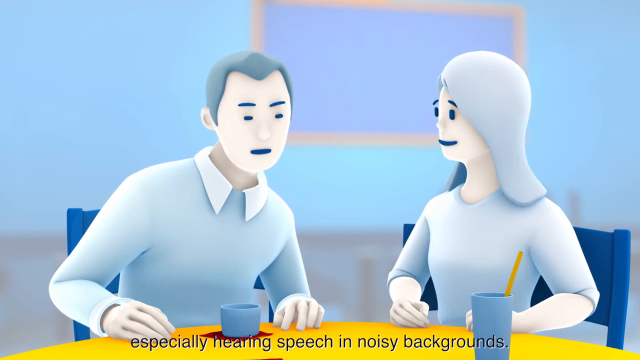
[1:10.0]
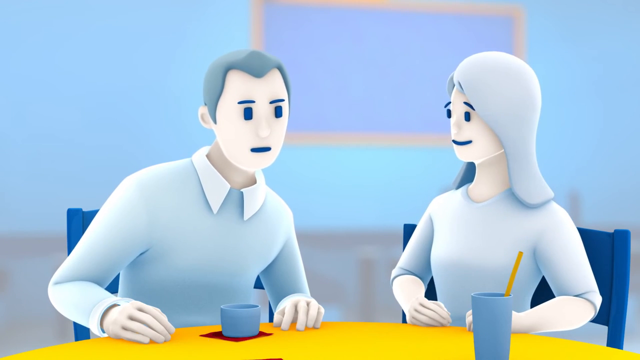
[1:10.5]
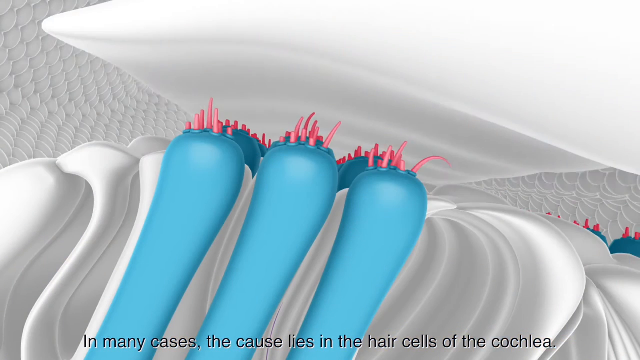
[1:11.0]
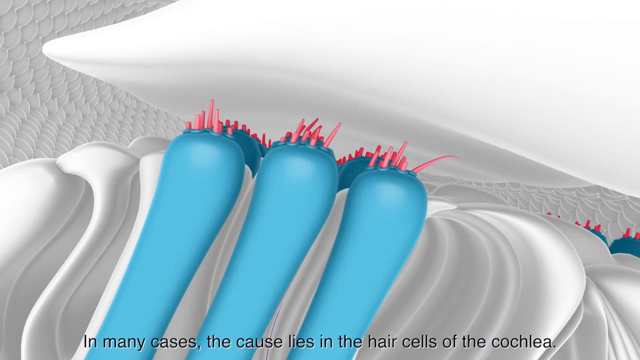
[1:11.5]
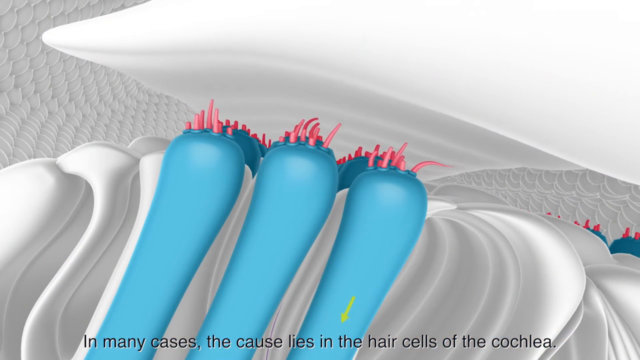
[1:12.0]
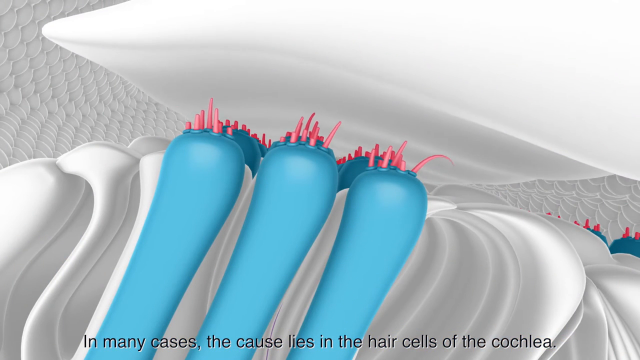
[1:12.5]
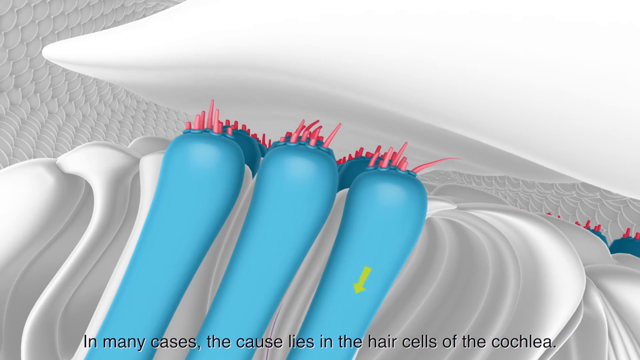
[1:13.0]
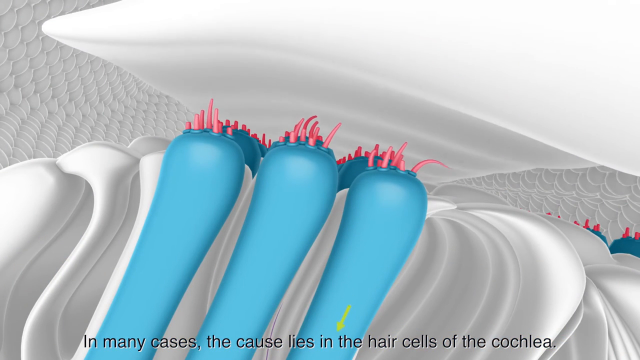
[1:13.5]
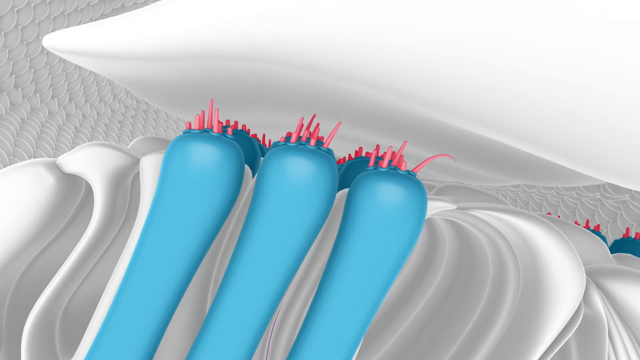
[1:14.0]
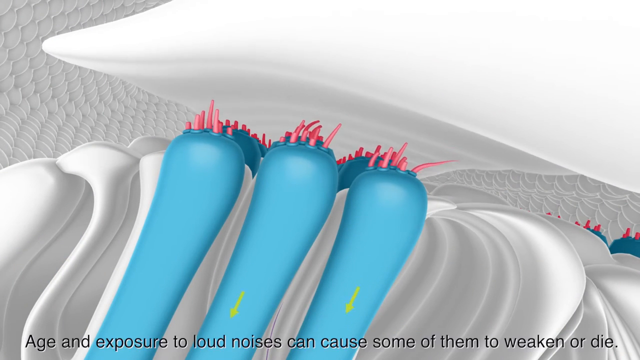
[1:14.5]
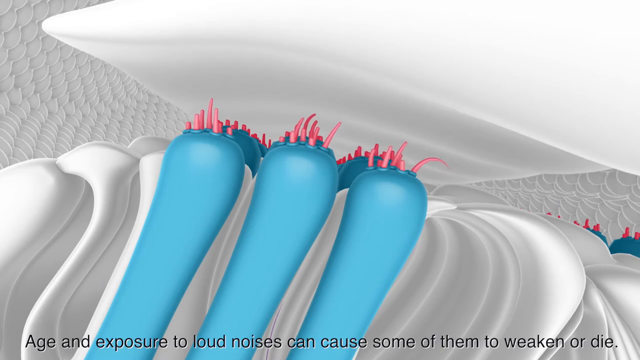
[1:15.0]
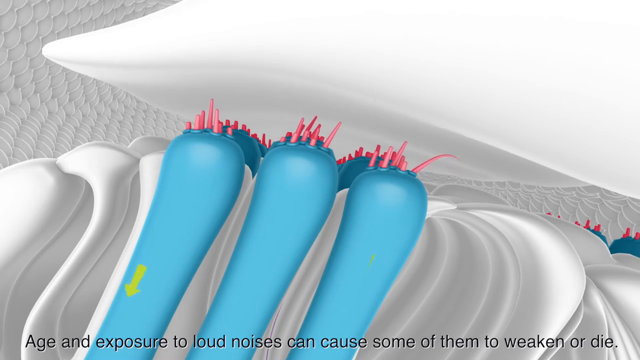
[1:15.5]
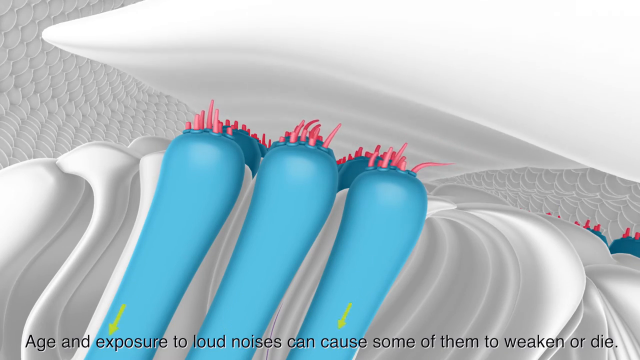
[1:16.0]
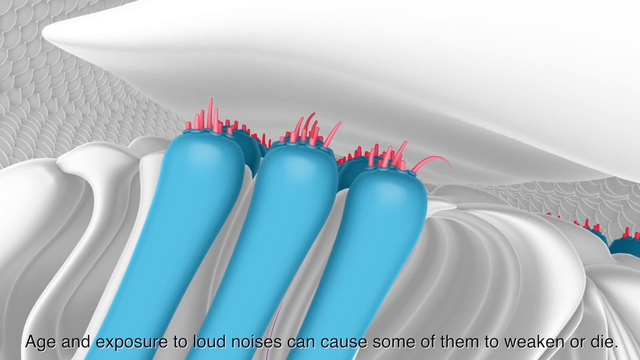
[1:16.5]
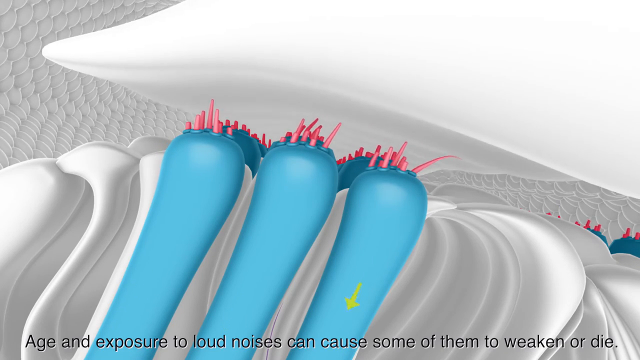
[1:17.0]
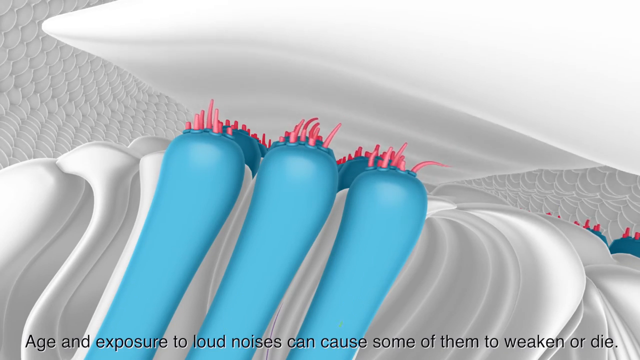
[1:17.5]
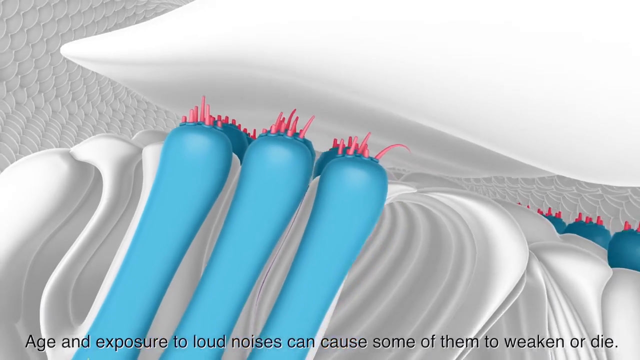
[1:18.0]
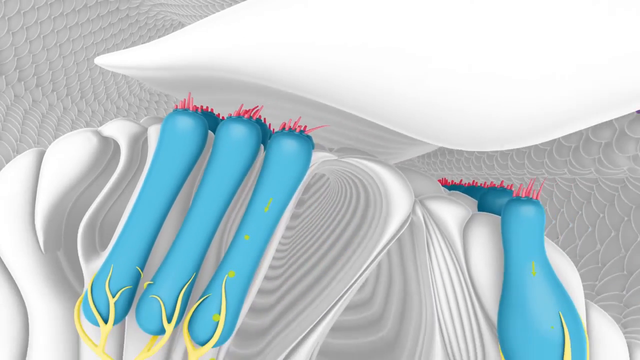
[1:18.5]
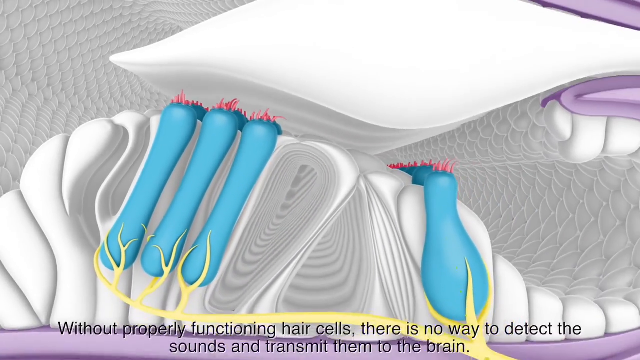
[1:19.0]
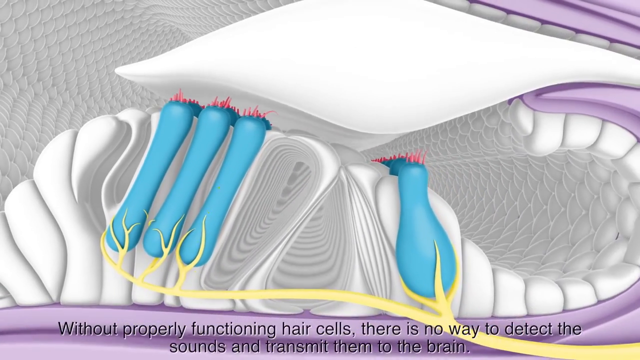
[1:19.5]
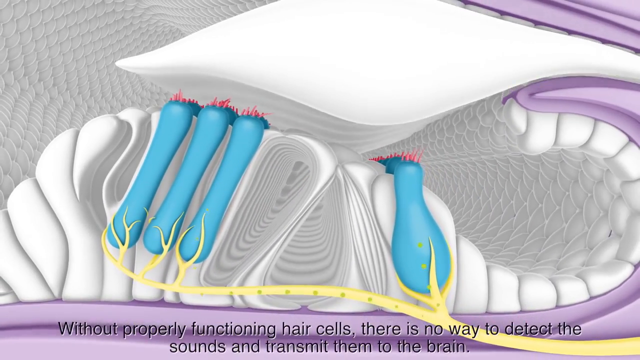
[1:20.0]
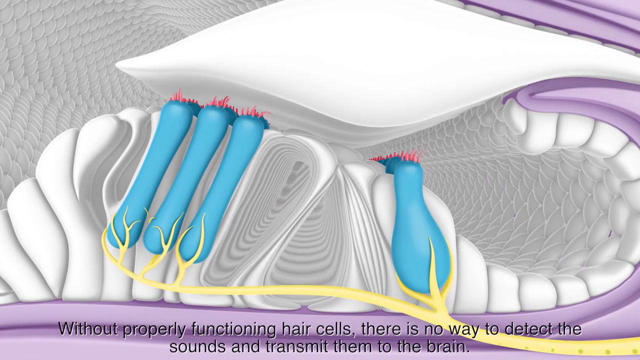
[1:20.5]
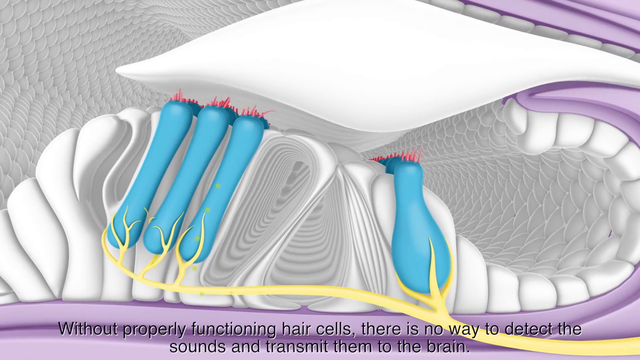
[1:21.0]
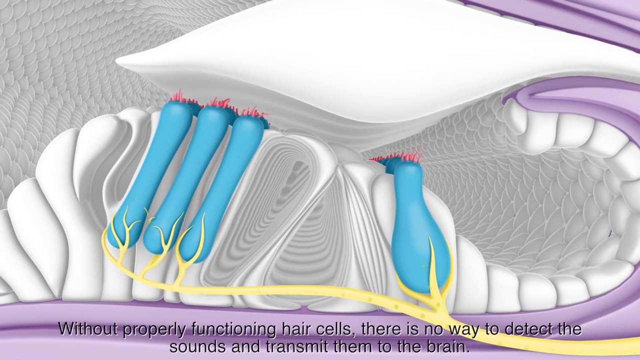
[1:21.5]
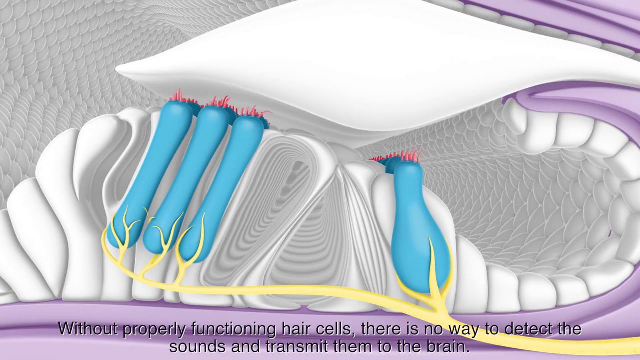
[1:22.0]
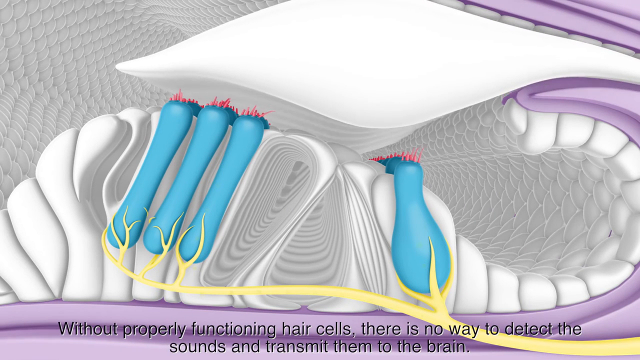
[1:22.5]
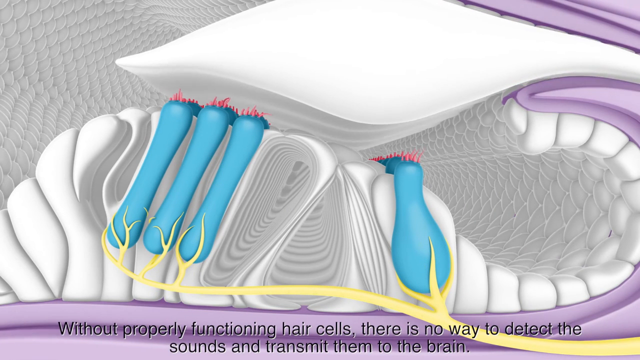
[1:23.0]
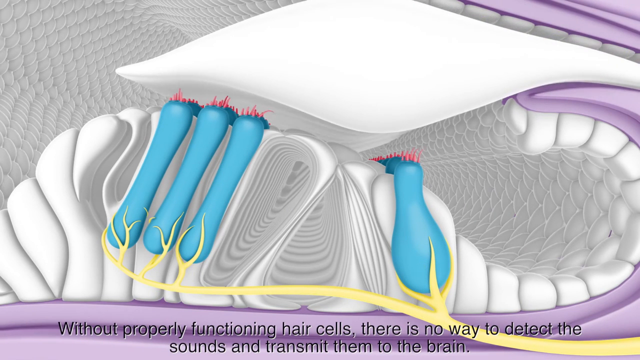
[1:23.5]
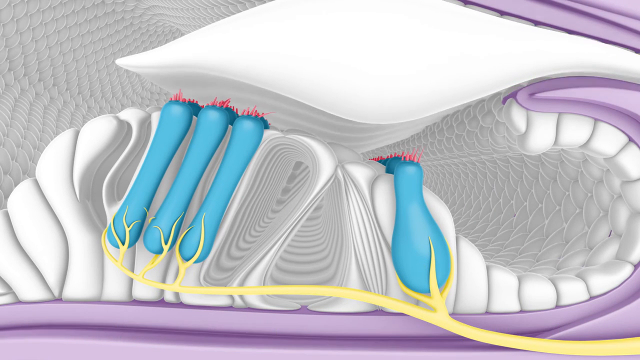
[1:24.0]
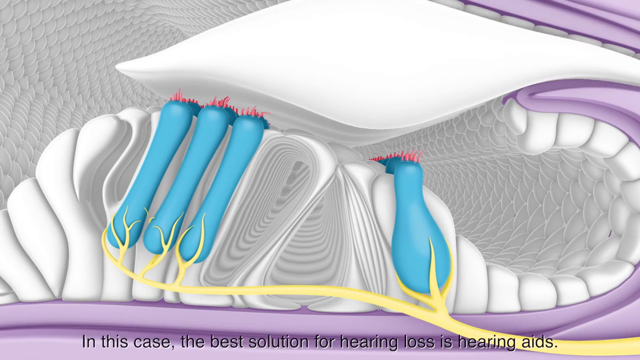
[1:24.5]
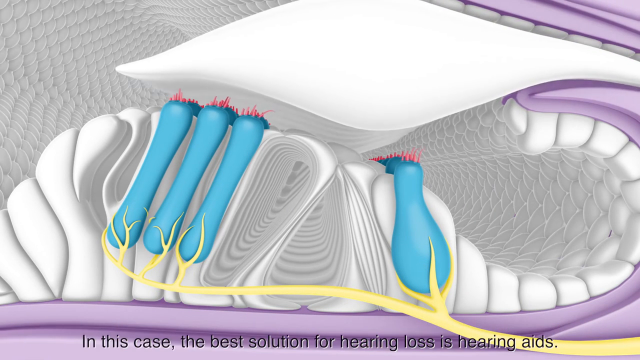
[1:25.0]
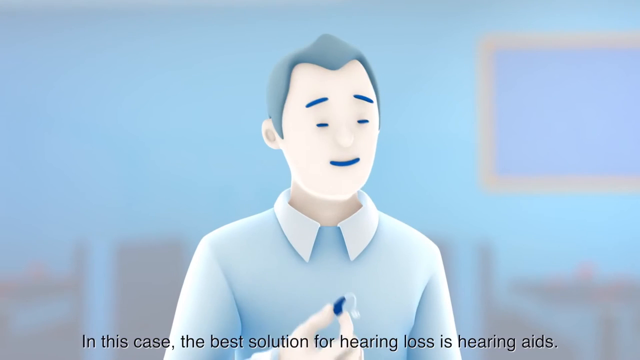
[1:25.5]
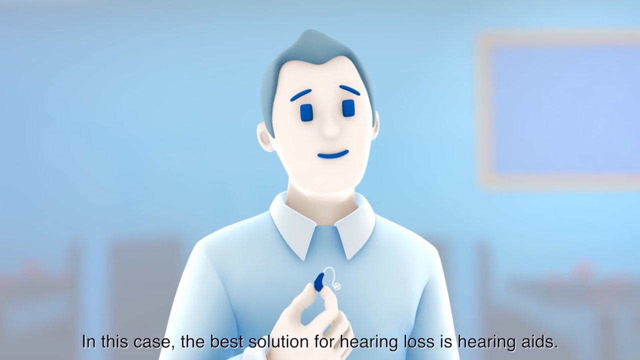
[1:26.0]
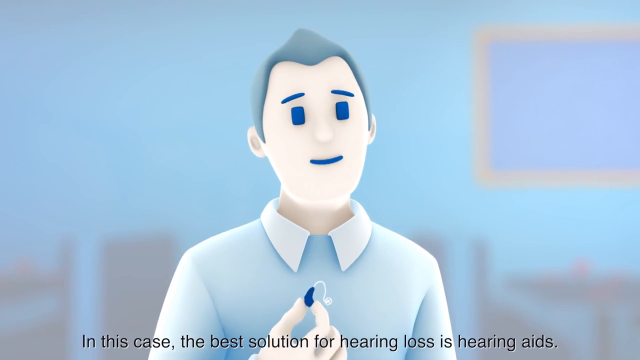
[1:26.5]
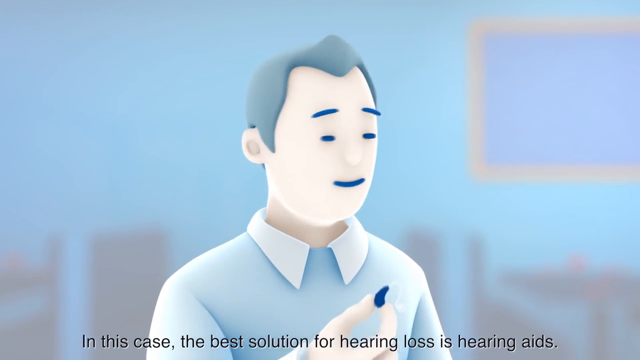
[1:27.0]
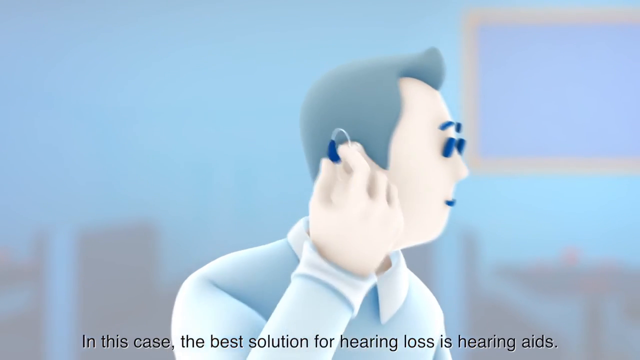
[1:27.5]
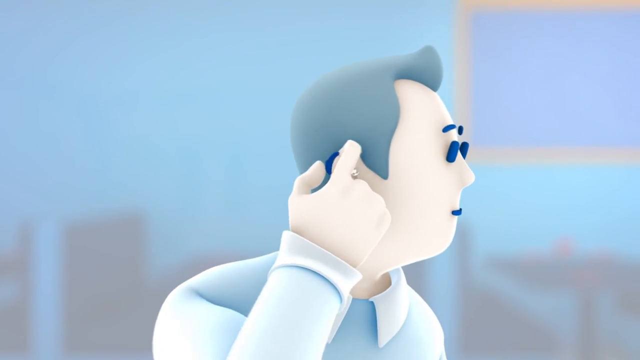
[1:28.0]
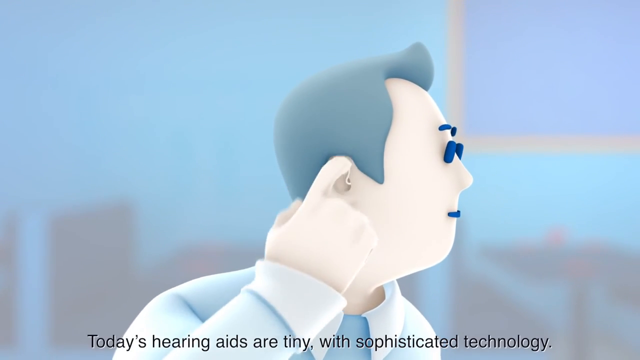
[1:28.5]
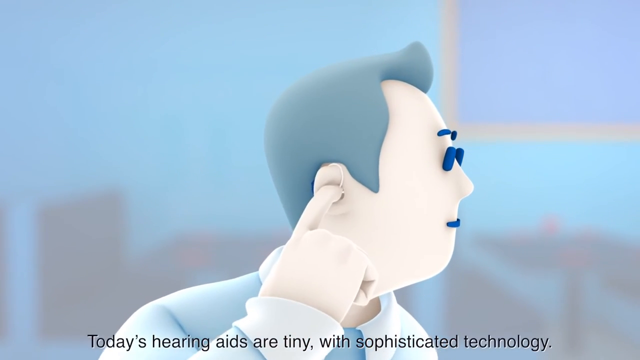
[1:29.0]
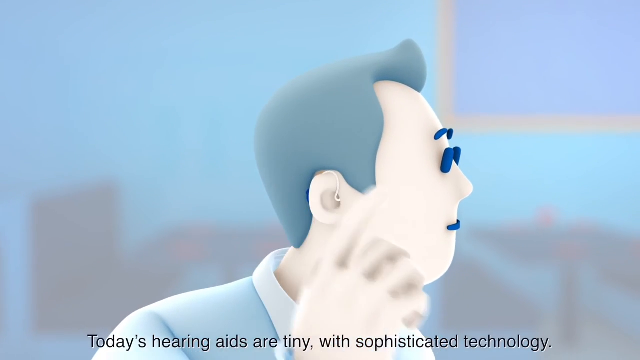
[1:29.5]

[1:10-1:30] The animation shows two people having a conversation in some kind of office setting or cafeteria. They sit at a table in blue chairs, the male on the left and the female on the right, with some kind of chalkboard in the background. The male seems to be having trouble hearing or understanding what the female is saying, so he leans his left ear closer to her and leans his body toward her. He has a coffee mug in front of him, and she has a cup with a straw in it. She appears to be smiling. The animation then shows a part of the inside of the ear, with blue tubes rounded on the upper end and red hairs, some of which are broken off. Above the red hairs, a flapping white material keeps coming down and pressing onto them, and occasionally a signal is sent through a blue tube, shown as a yellowish green arrow moving from upper to lower. The signals are infrequent, apparently suggesting the person does not hear well and misses some of the content. The man then holds what looks like a hearing aid in his right hand, pinching it between his index finger and thumb. He puts it on his ear so that part of it goes inside the ear to hold it in place and part goes behind the ear, and he pushes it in.